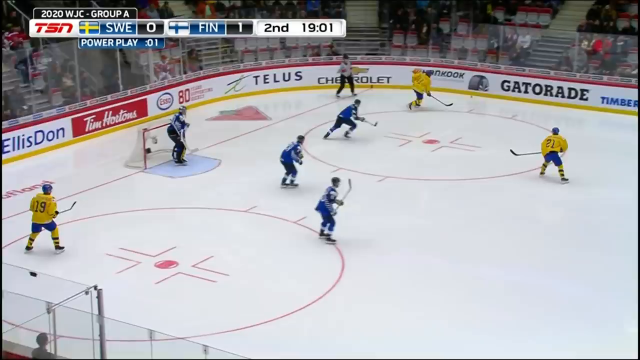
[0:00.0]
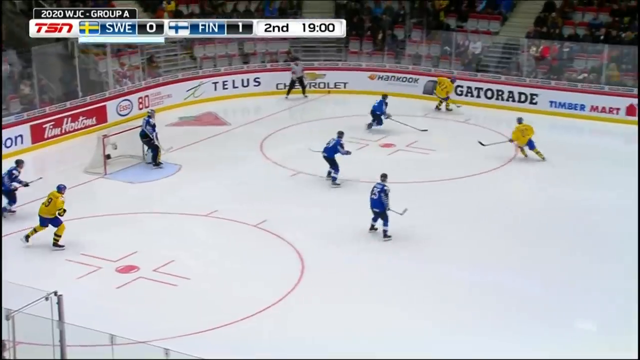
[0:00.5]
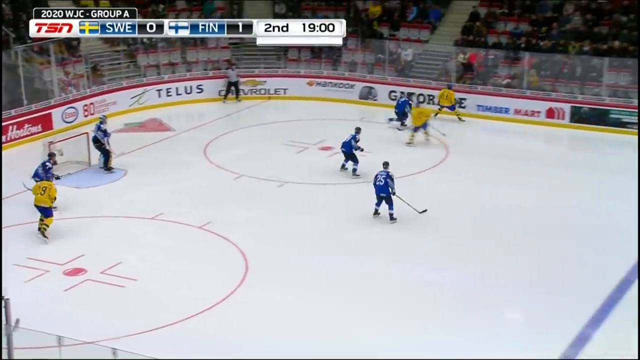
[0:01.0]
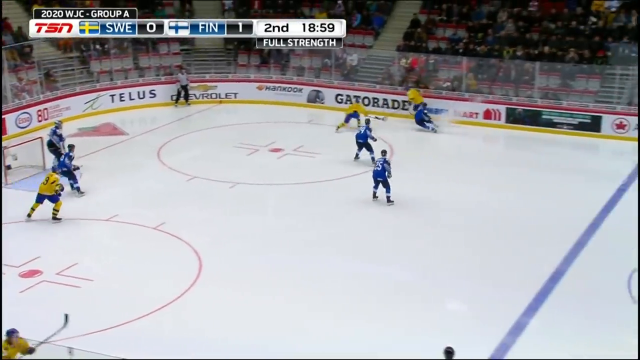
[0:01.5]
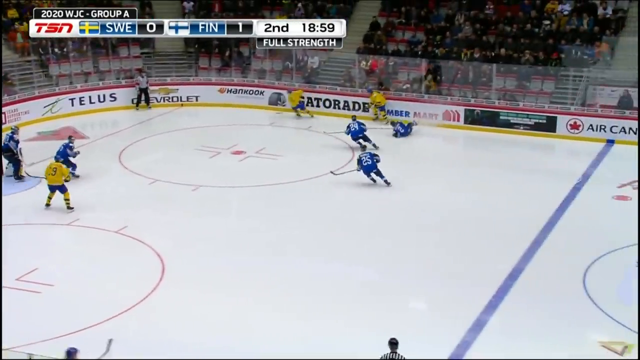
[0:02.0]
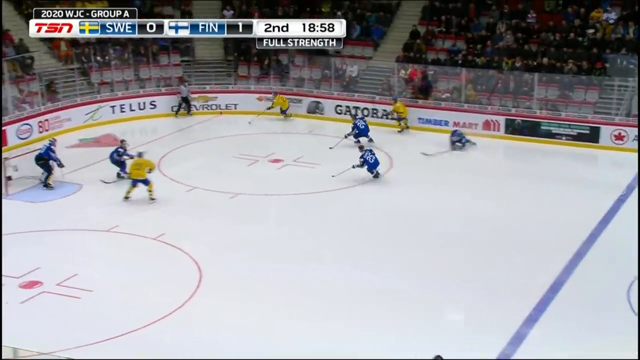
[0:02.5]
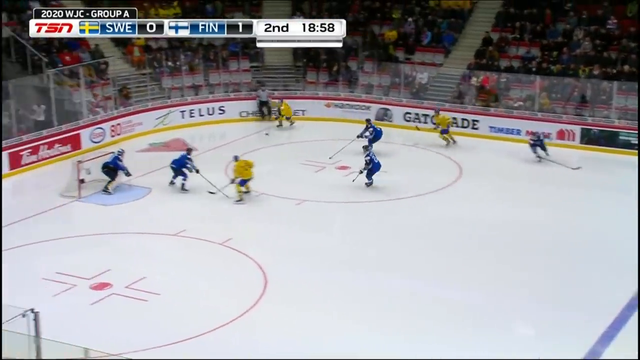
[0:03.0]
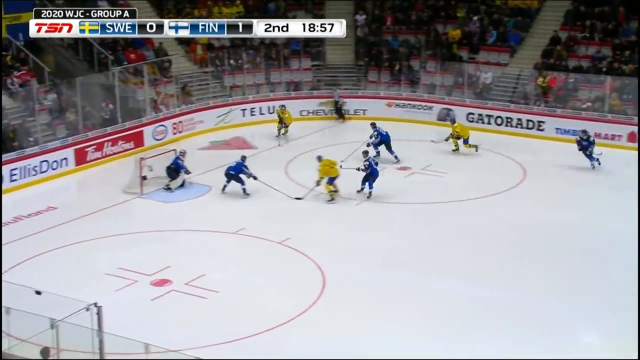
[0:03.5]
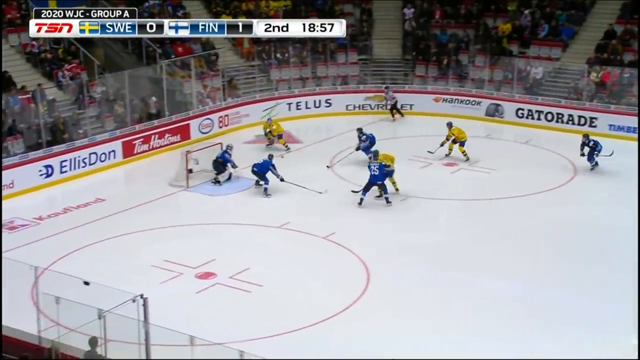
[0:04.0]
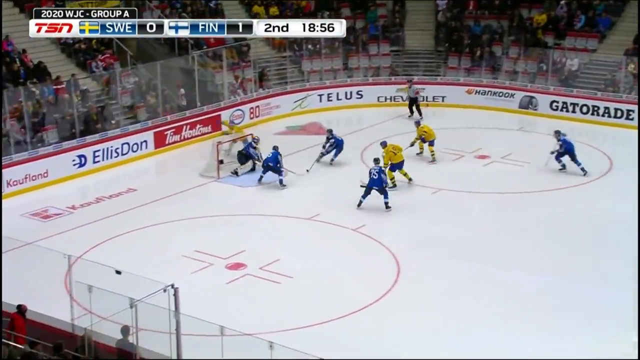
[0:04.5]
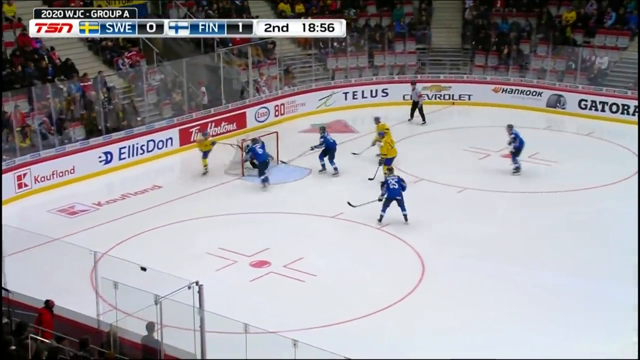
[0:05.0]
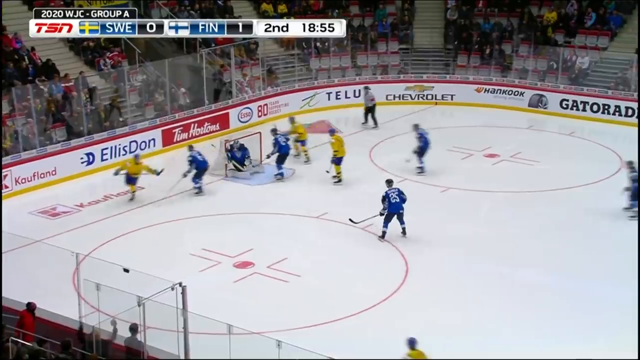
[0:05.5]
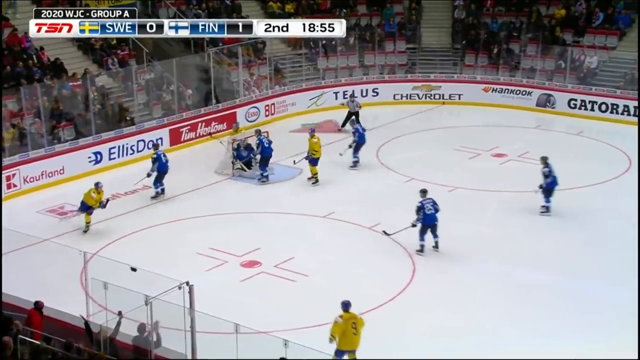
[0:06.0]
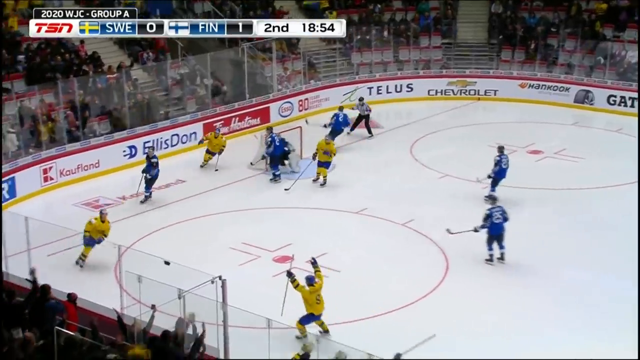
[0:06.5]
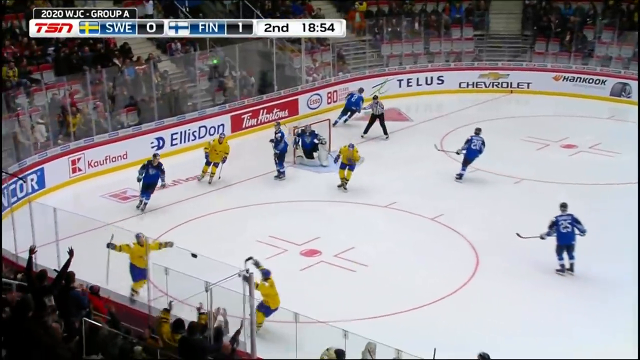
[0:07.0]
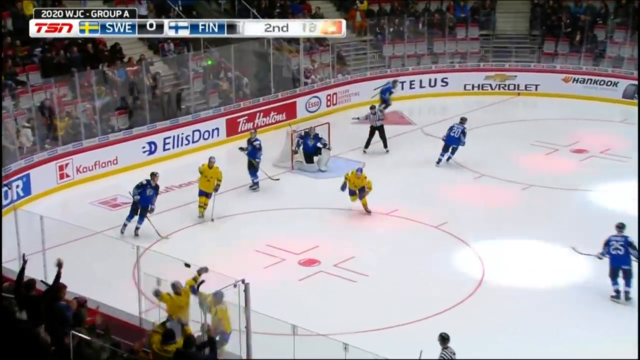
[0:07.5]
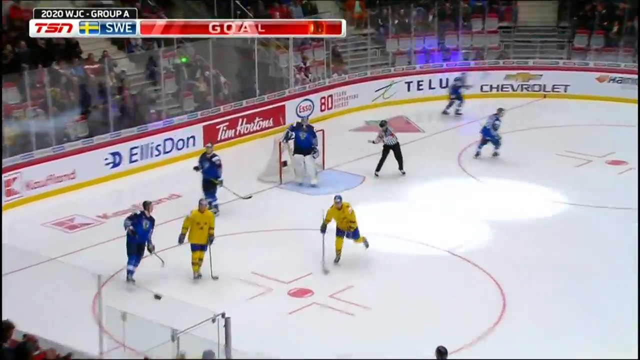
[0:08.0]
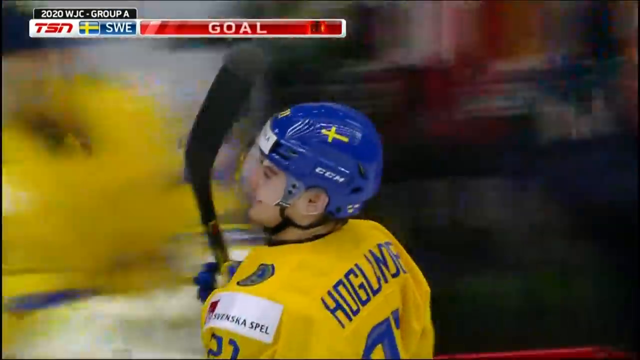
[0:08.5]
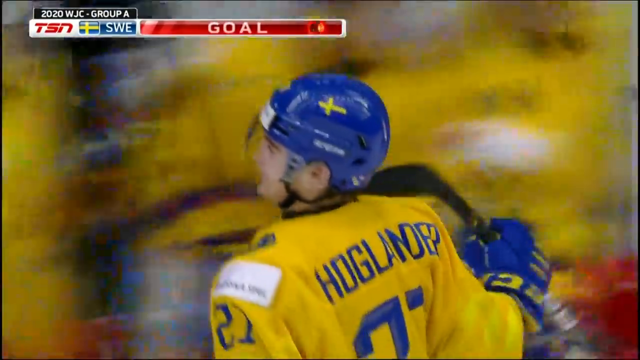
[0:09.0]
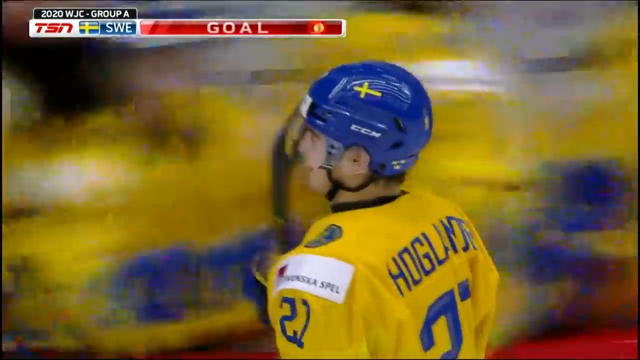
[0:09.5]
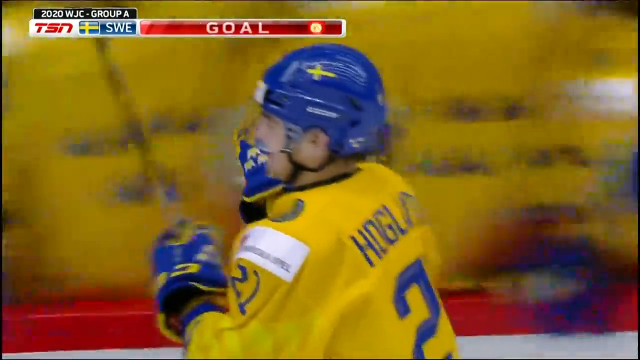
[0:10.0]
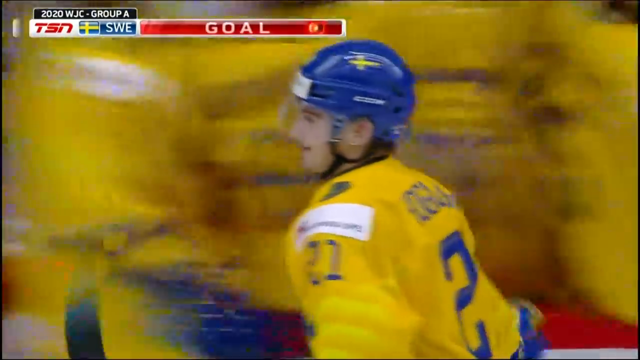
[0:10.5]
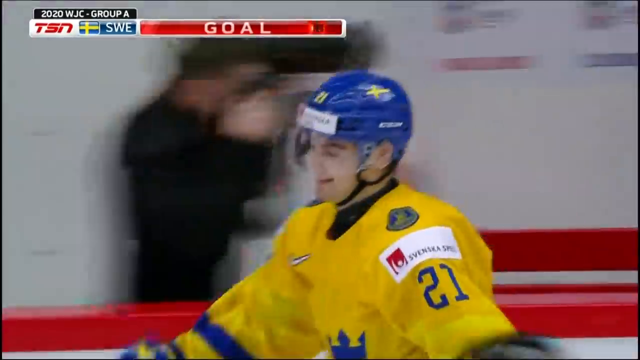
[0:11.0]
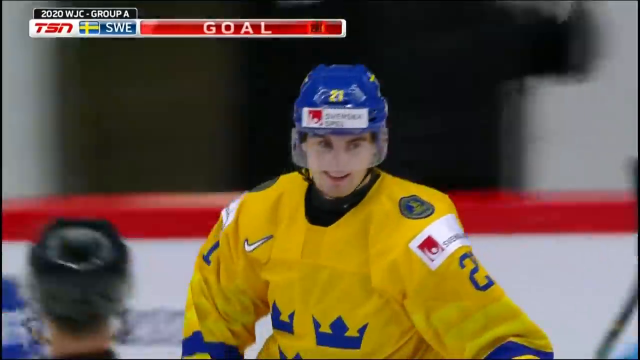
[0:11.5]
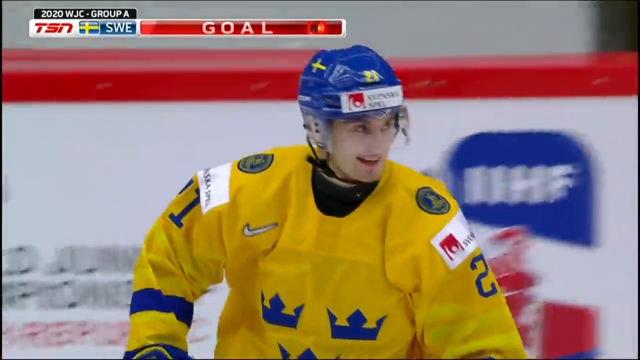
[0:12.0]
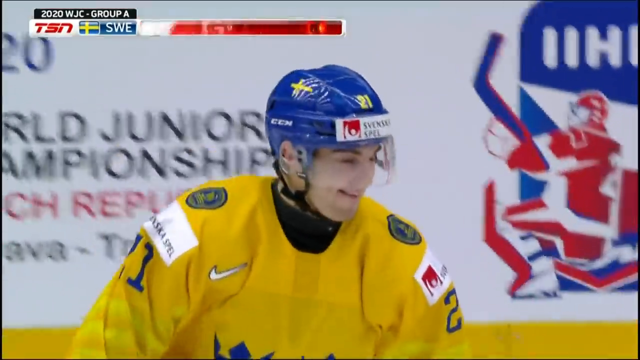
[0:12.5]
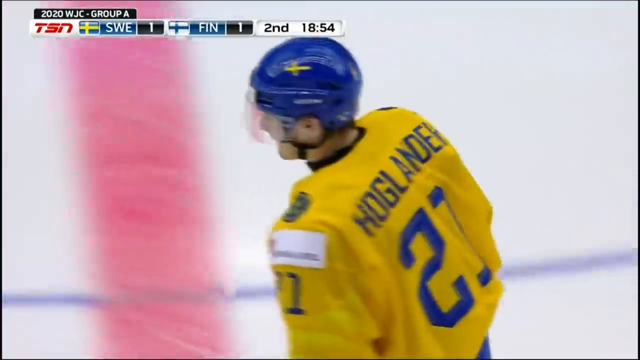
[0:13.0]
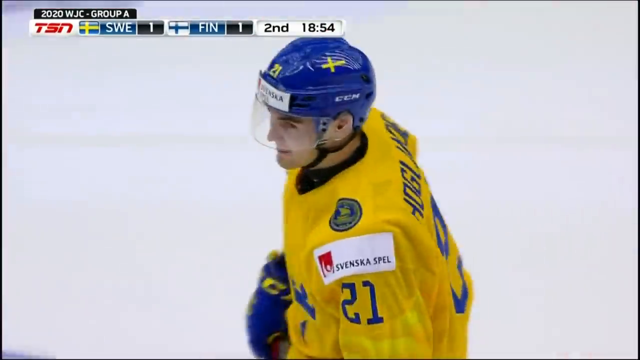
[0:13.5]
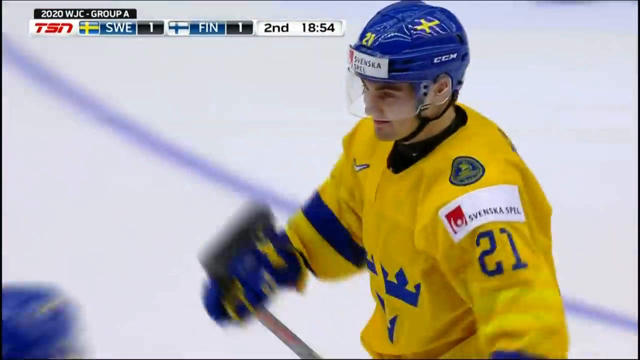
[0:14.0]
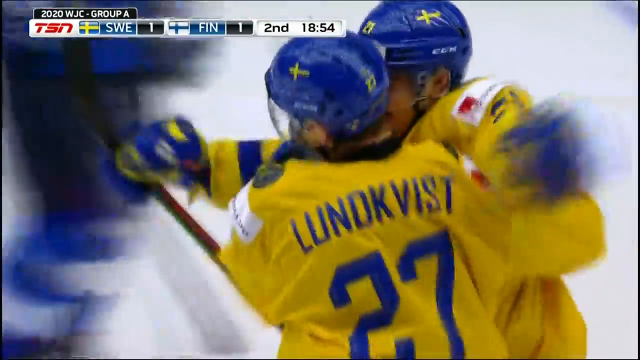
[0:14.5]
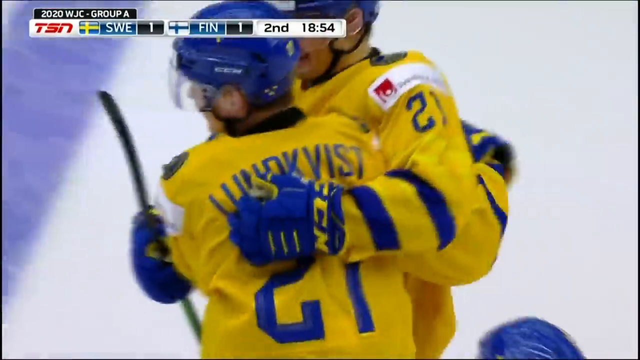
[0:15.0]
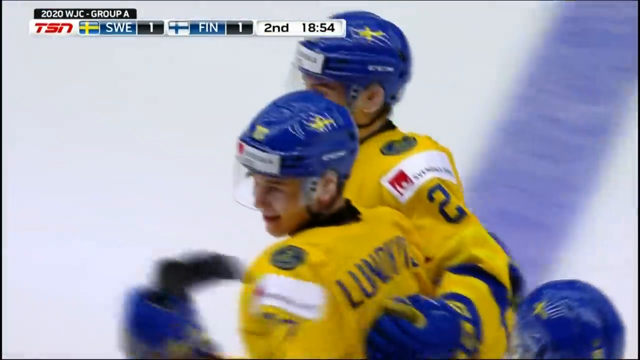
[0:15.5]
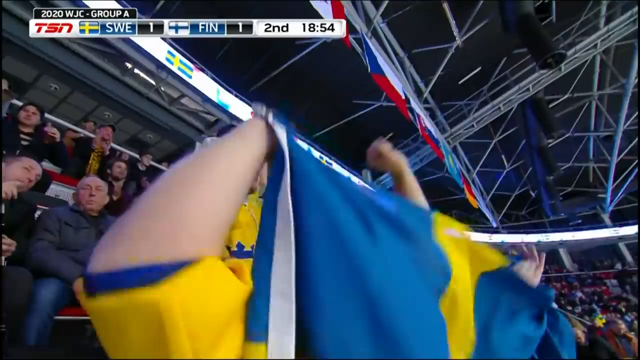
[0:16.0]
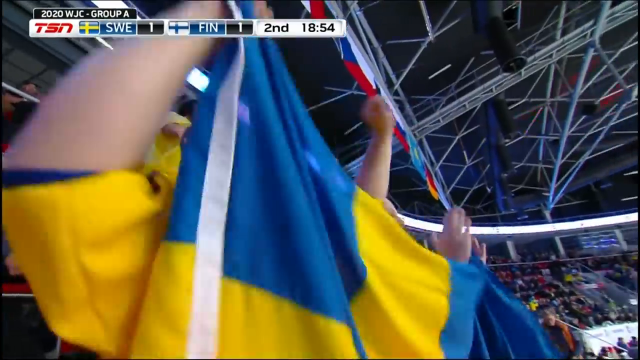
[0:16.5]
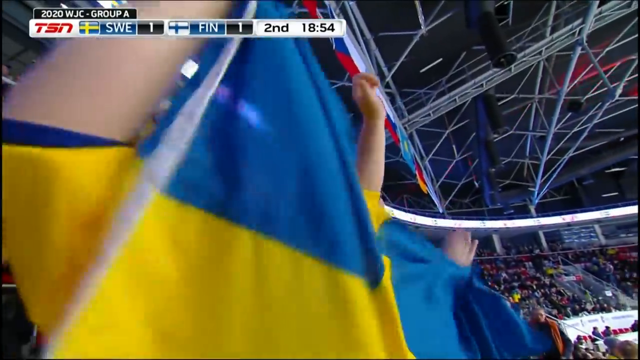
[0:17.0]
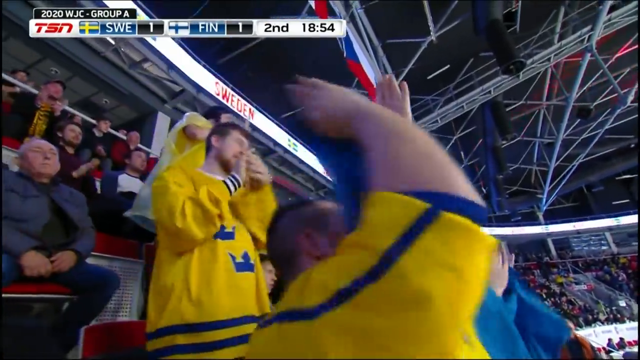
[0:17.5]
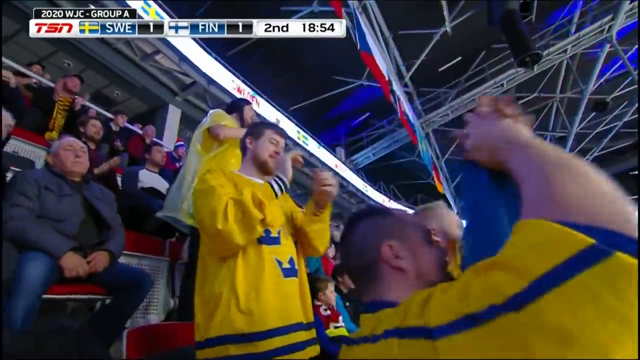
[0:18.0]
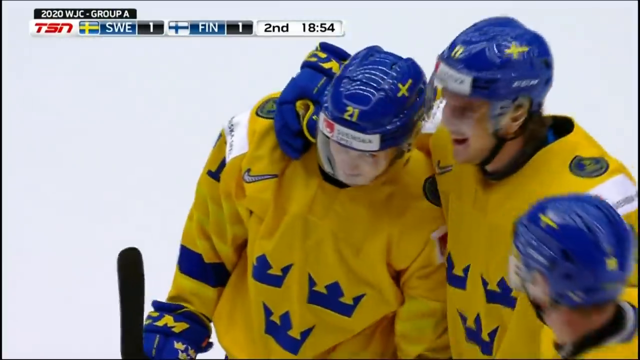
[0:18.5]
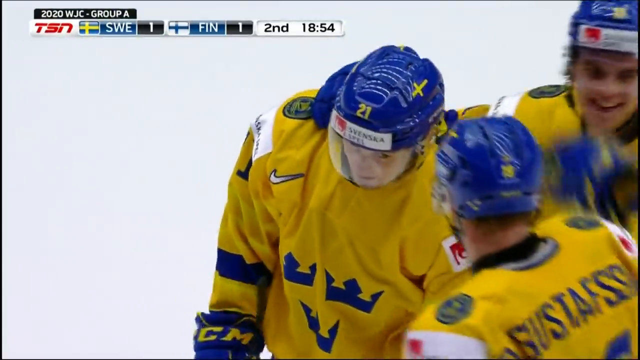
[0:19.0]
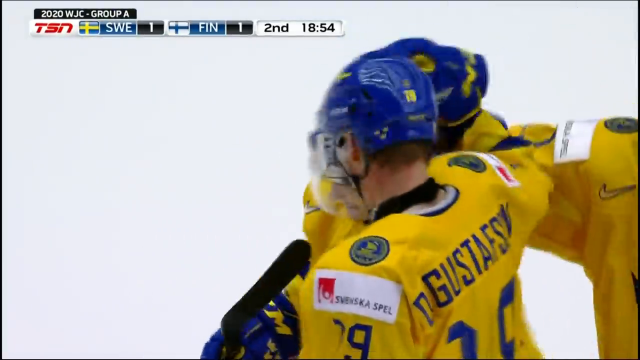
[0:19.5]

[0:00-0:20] This is an international hockey game, apparently the 2020 World Junior Championship, a Group A game between Sweden and Finland, broadcast on TSN according to the score ticker in the top left. Finland leads 1-0 with 19 minutes left in the second period, and Sweden is just finishing a power play. Play is in the Finnish zone, where Sweden cycles the puck around the boards. A Swedish player gets the puck, cradles it in his stick in a move known in hockey as the Michigan, and sneaks the puck from his stick over the right shoulder of the goaltender to score. The scorer is Sweden's number 21, apparently Hoagland. The crowd is shown, with people jumping up and down with Swedish flags to celebrate the goal.